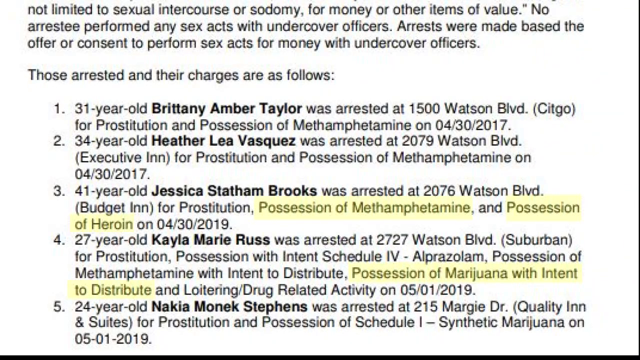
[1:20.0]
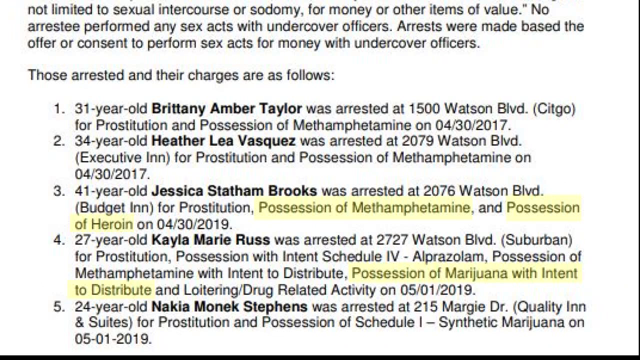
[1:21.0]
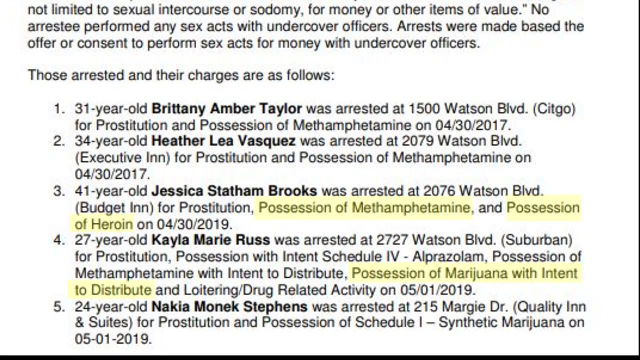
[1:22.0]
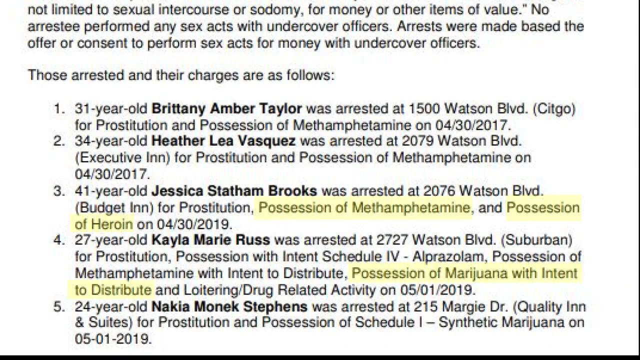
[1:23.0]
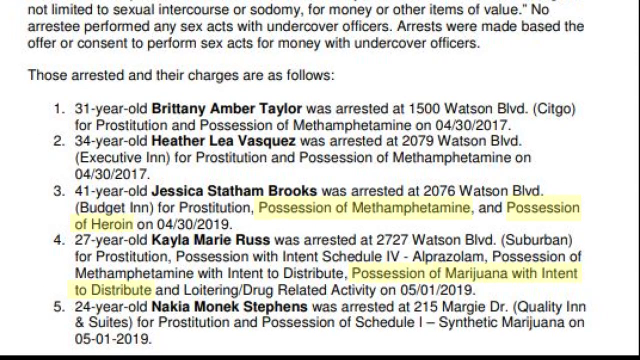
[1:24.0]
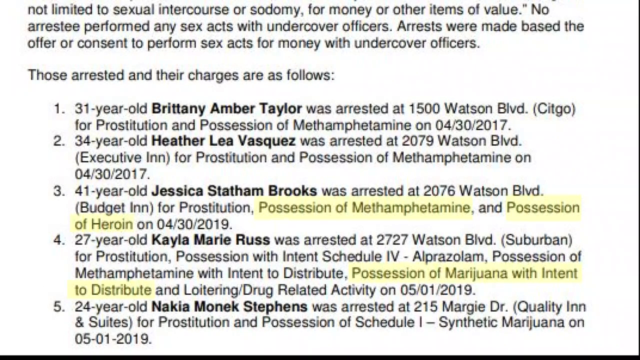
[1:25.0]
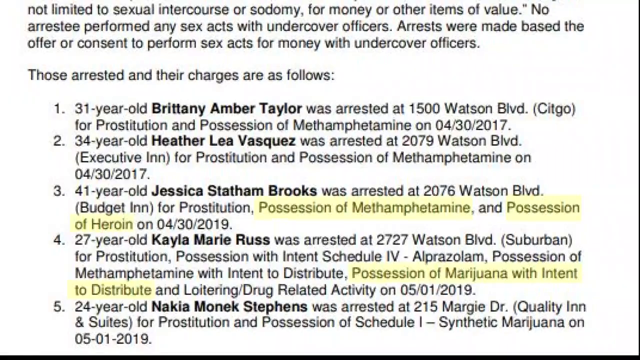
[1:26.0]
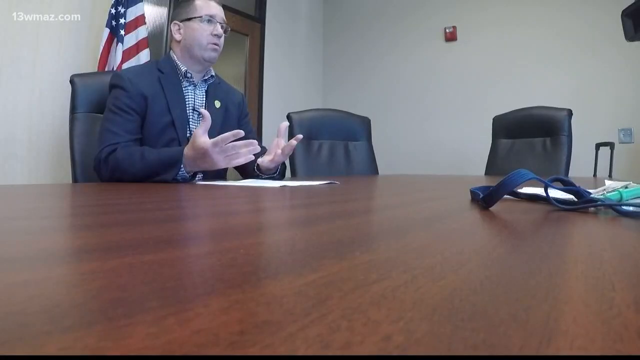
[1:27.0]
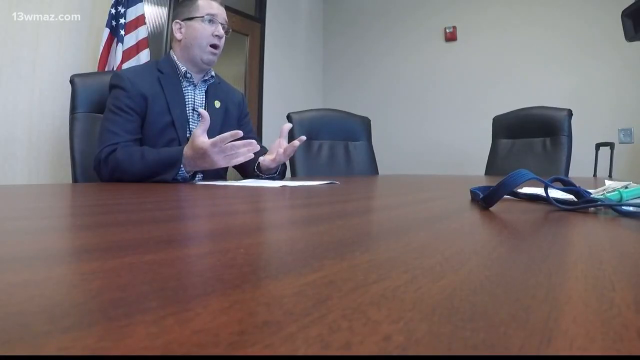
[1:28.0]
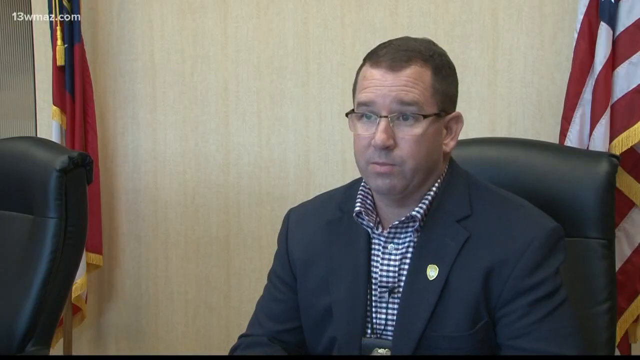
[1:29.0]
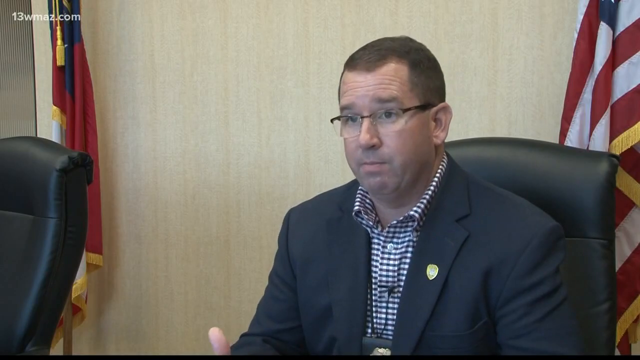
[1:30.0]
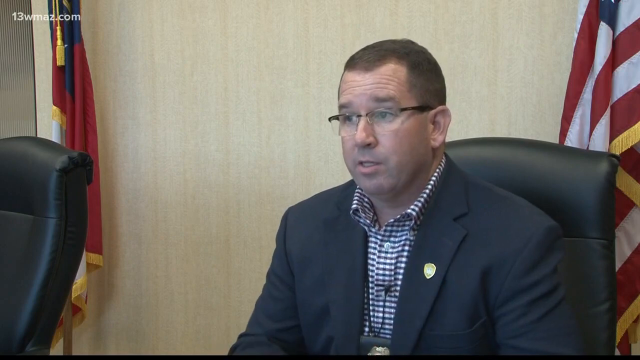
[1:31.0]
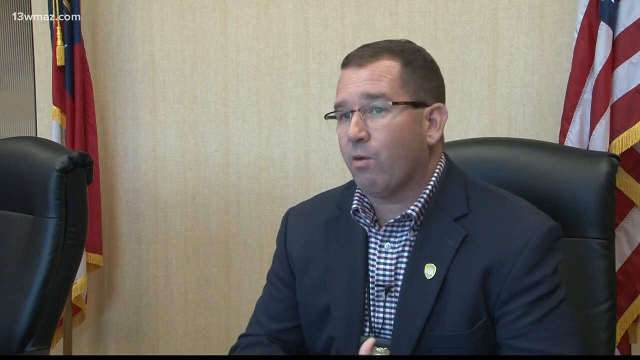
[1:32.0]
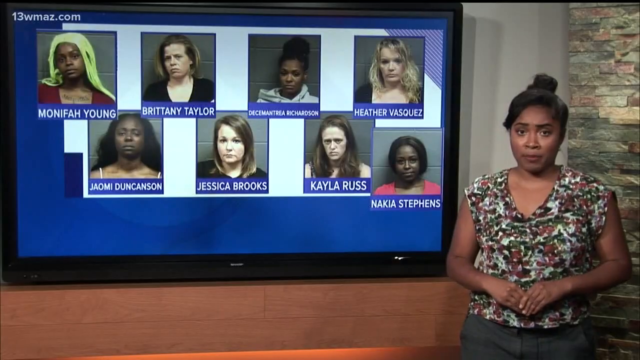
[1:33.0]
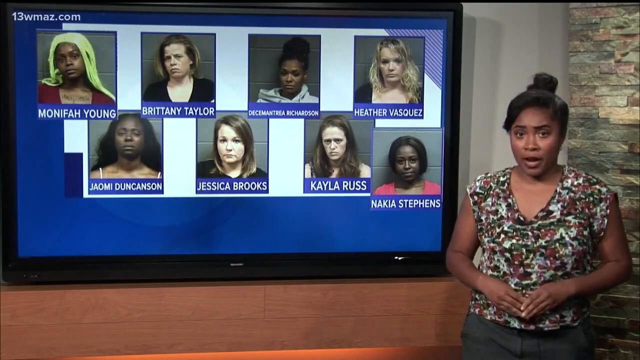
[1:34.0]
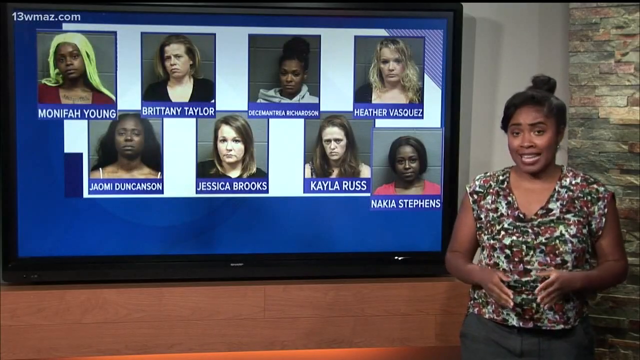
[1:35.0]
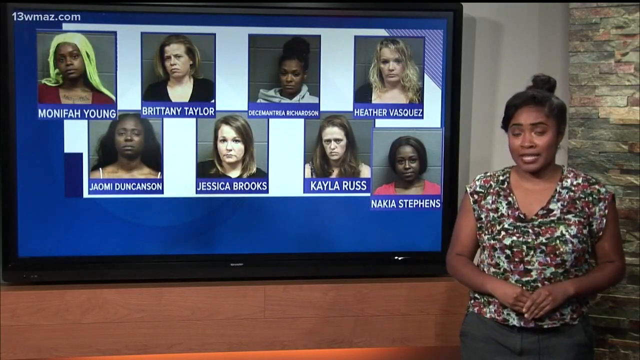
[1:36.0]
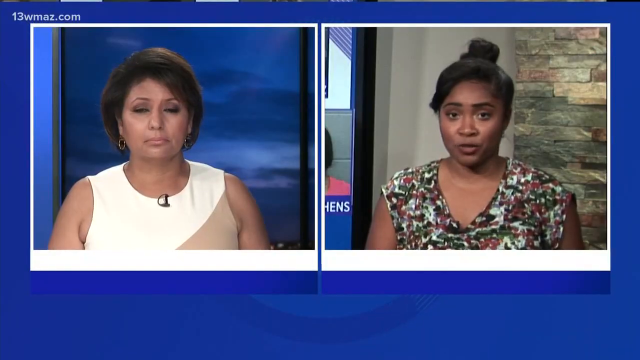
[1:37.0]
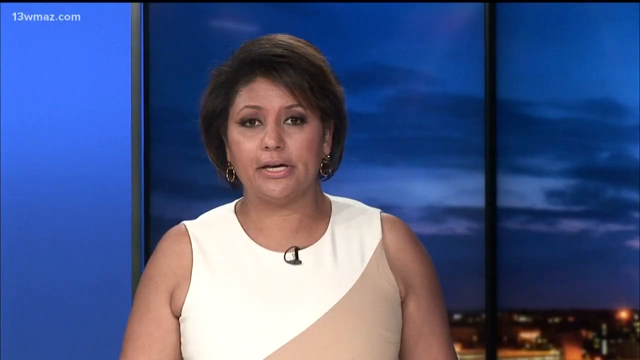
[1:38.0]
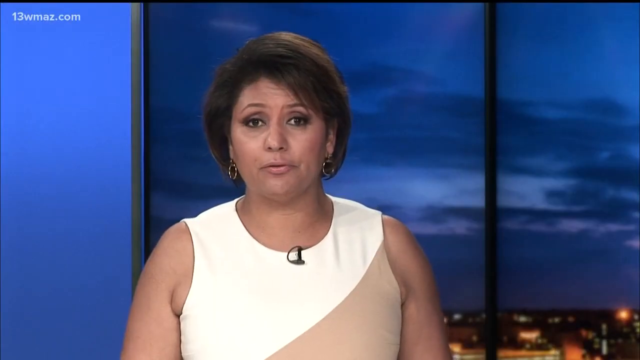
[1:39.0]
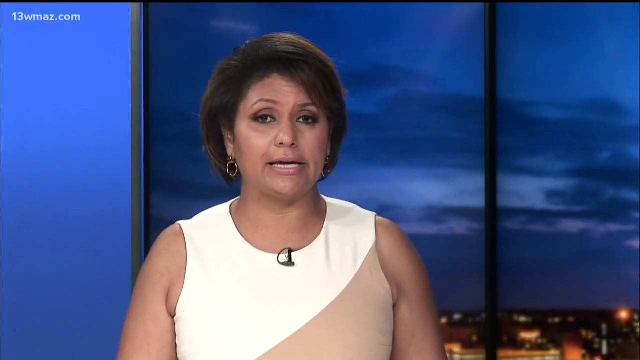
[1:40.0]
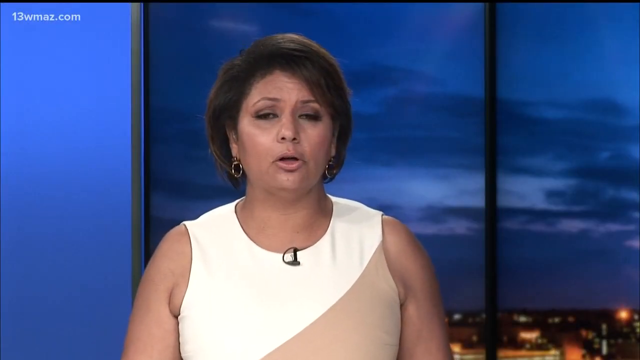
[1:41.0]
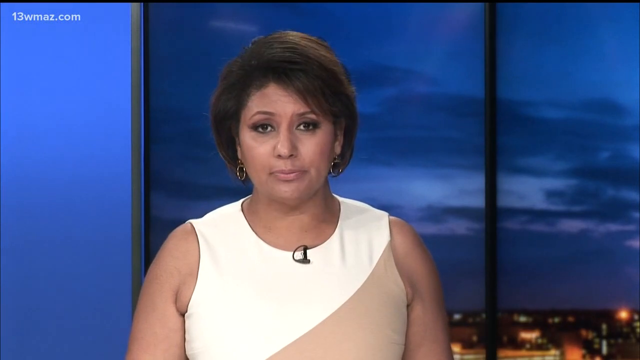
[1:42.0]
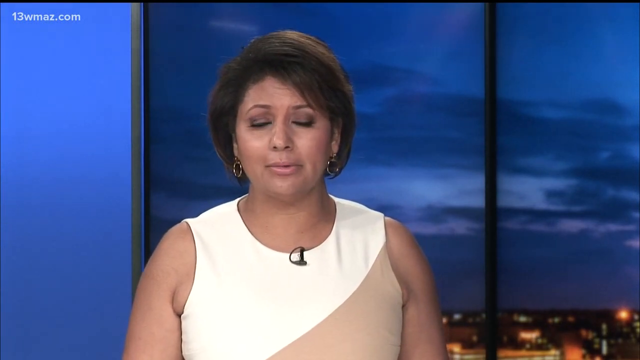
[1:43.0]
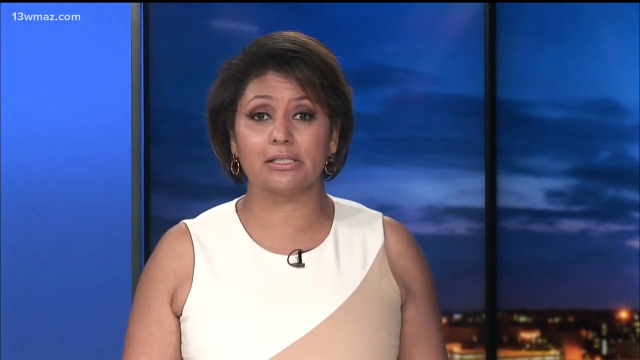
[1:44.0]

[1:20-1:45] A paper on the screen lists the charges against certain people and what the charges are for, with some words highlighted, such as "possession of marijuana with intent to distribute" and "drug related activities", along with the dates when the crimes happened. Next, a man is seated in what is like a conference room, giving an interview; he sits on a black chair with empty black chairs next to him. A woman then presents while standing on the left side, with an unpainted brick wall behind her. A split screen follows, showing a woman wearing a white and brown dress and the person she is speaking to. The screen then changes to show only the woman in the white and brown dress against a blue background. She speaks as if facing the camera, wears a very serious face and earrings, and a microphone can be seen on the collar of the dress she is wearing, which is black.